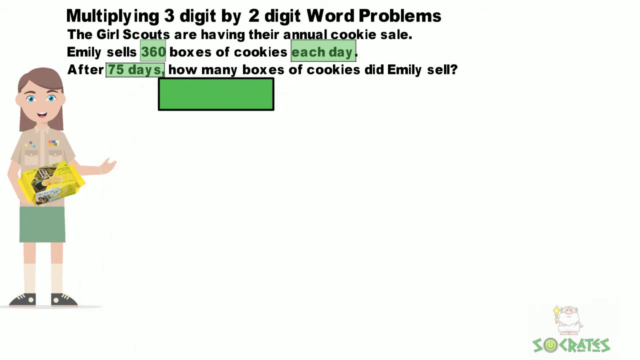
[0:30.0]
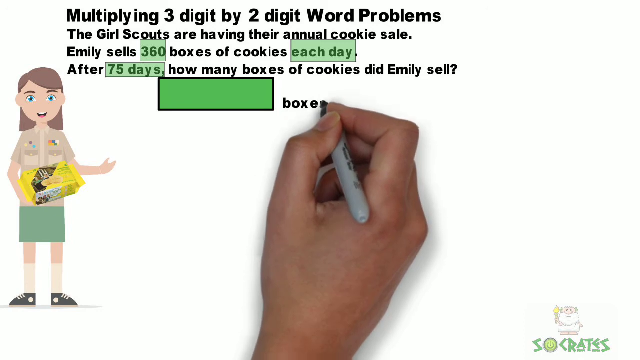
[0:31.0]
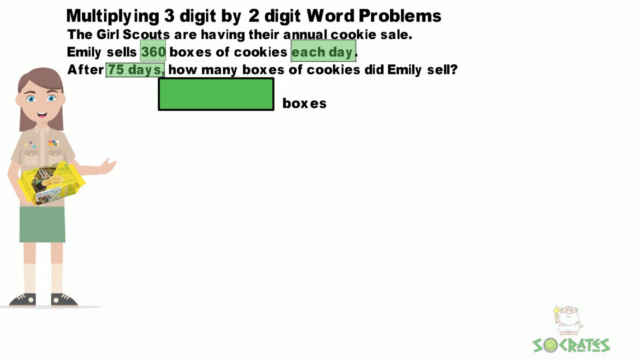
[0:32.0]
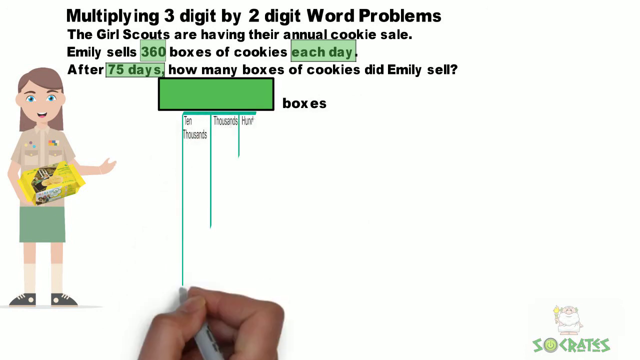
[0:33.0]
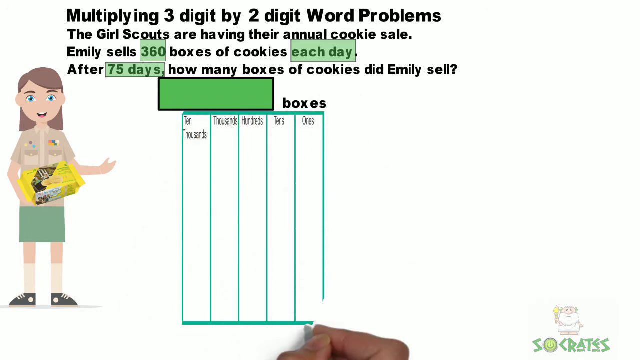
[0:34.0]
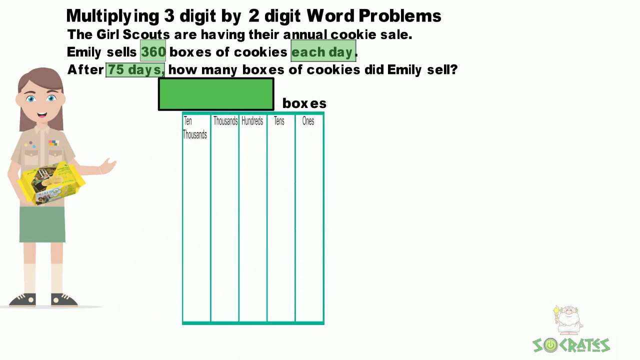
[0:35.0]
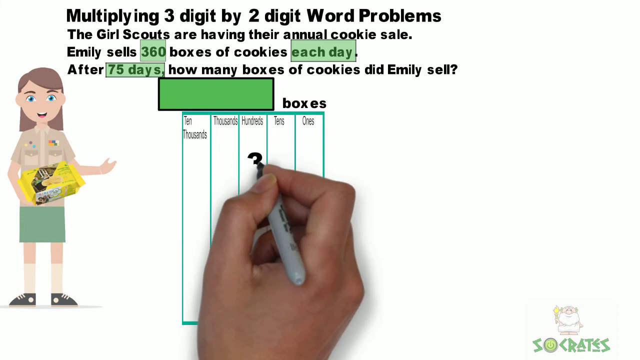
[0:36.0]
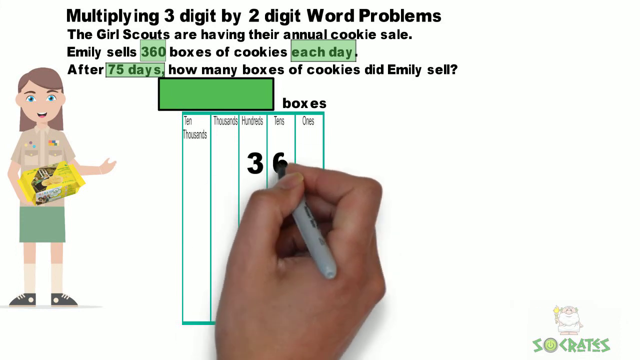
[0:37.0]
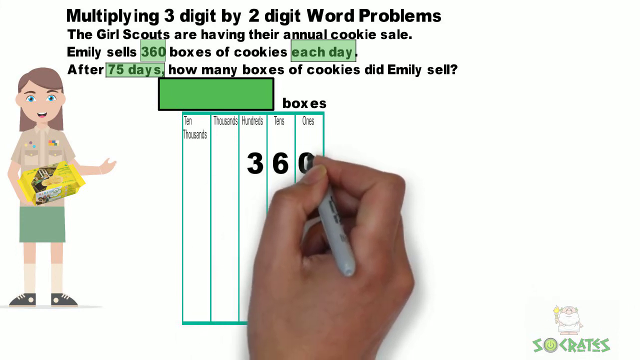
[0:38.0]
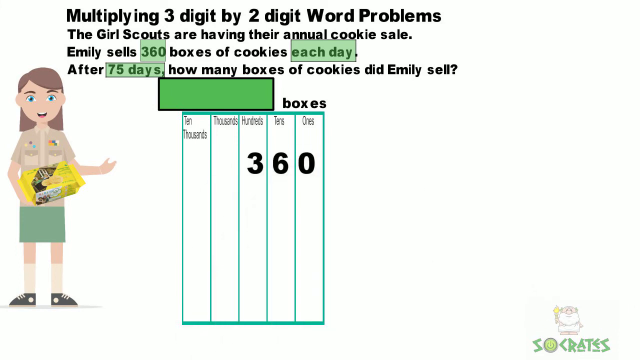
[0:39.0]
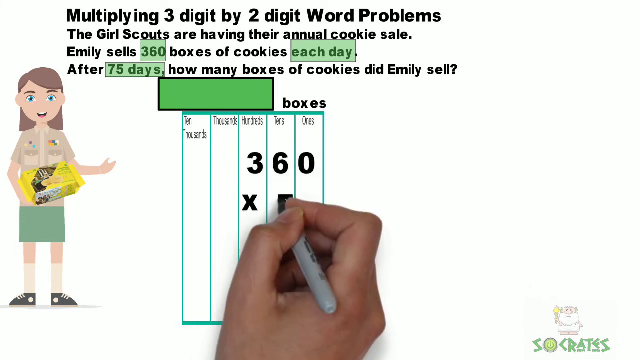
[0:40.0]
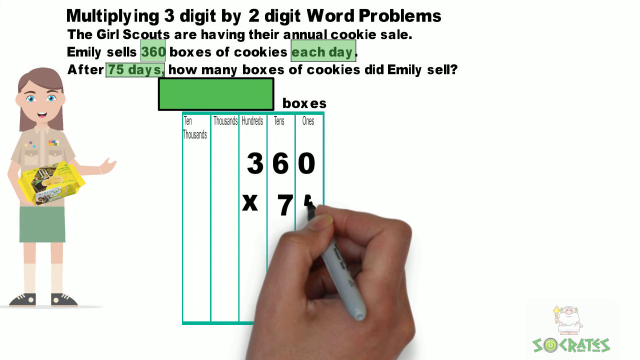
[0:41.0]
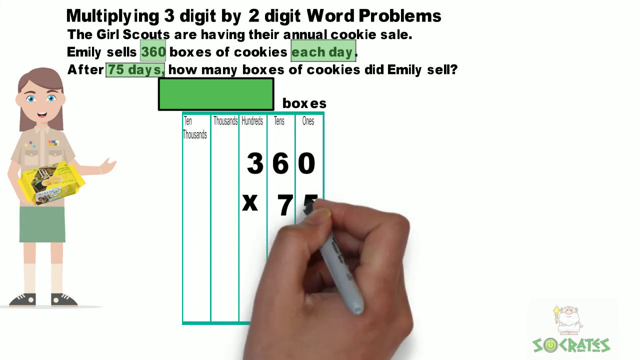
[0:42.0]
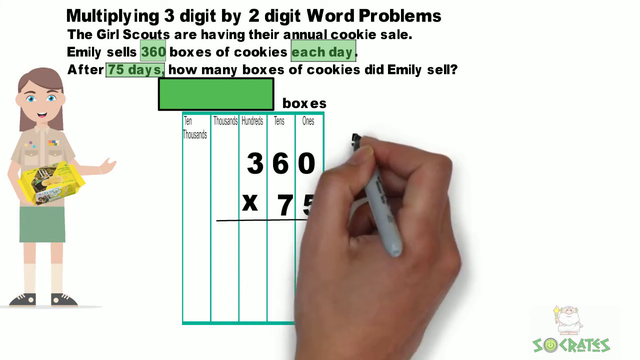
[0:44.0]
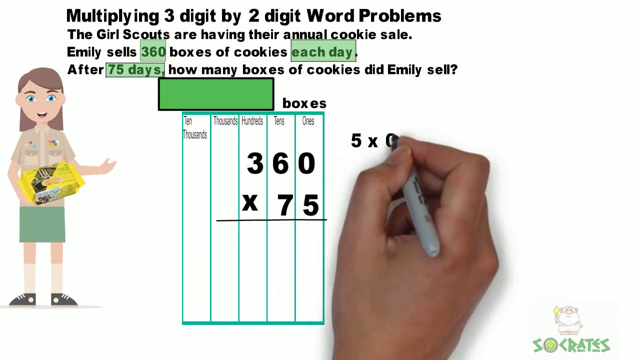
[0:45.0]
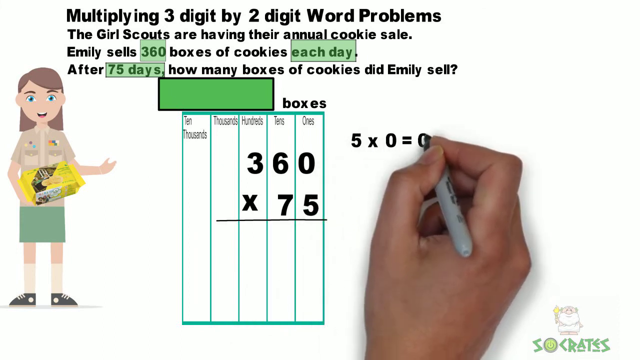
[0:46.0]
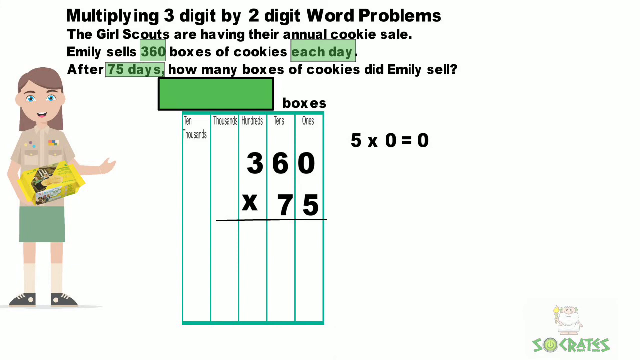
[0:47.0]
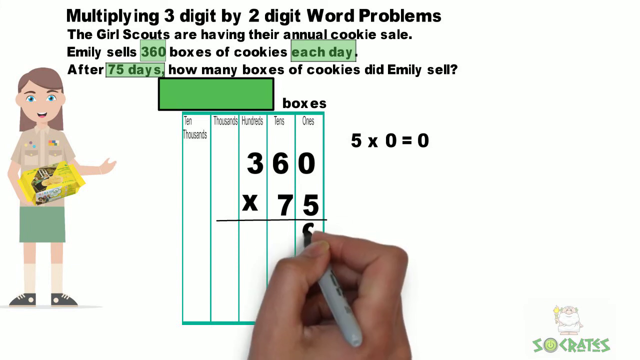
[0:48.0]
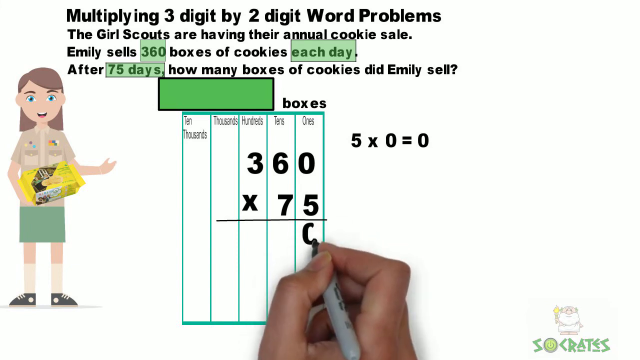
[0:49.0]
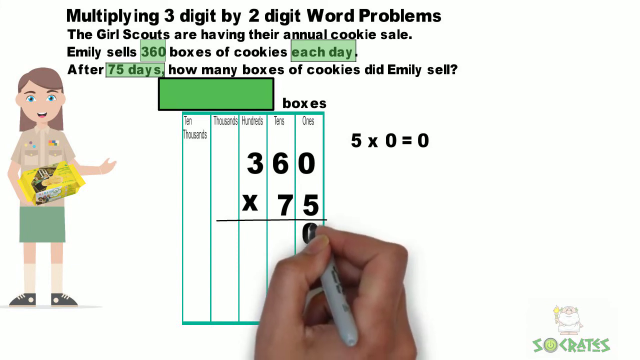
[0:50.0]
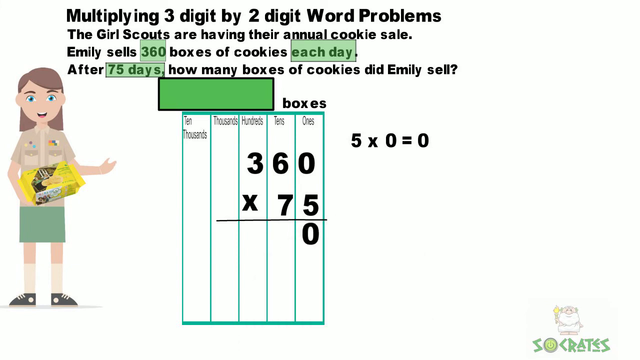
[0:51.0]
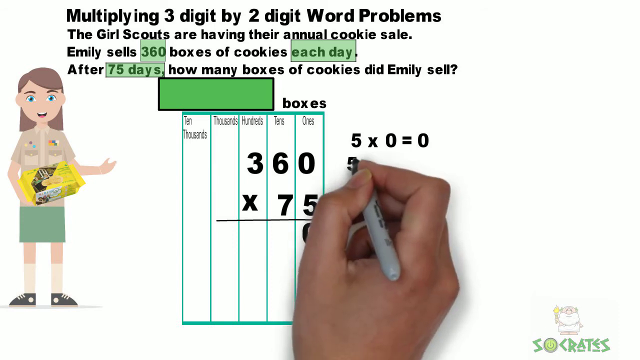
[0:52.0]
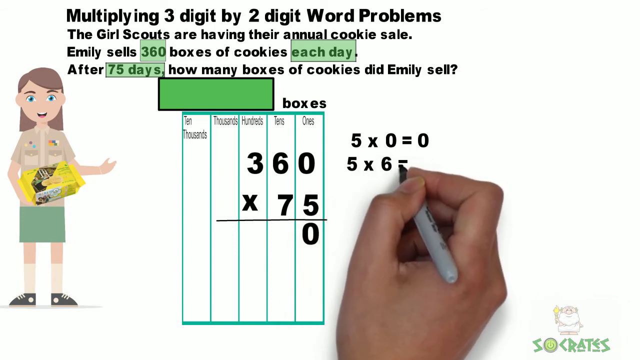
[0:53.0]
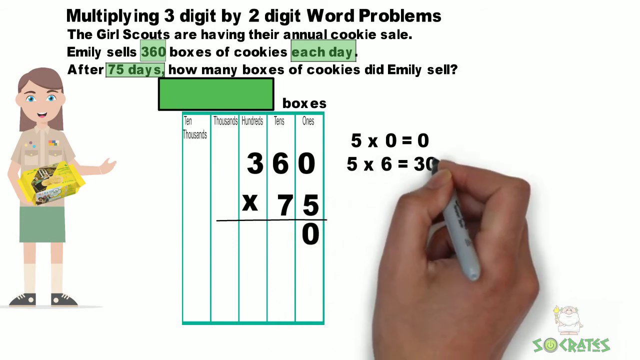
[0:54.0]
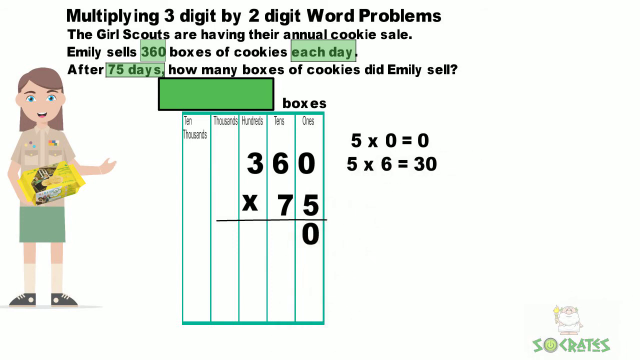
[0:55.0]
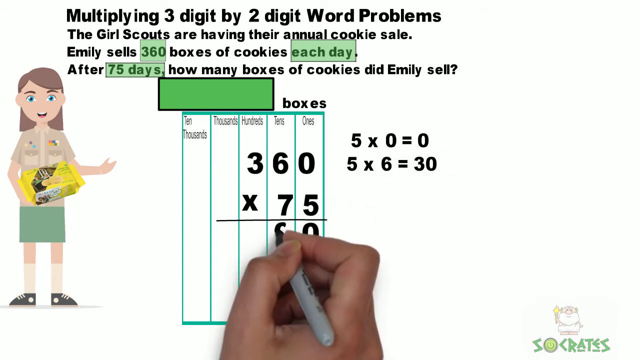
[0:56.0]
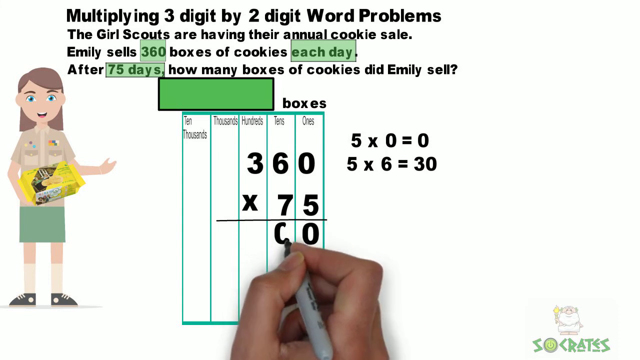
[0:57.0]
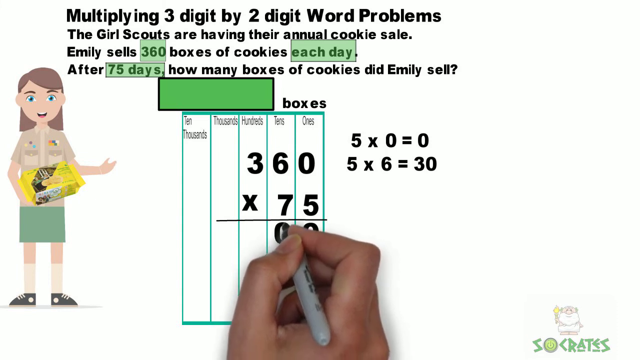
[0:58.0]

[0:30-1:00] A slide with text against a white background shows, on its left-hand side, a cartoon or digital image of what looks like a Girl Scout. She wears a traditional light brown top with some colored pins on it, a green skirt, knee-high white socks and black shoes, and holds what appears to be a yellow box of Girl Scout cookies. The black text reads "multiplying three-digit by two-digit word problems. The Girl Scouts are having their annual cookie sale. Emily sells 360 boxes of cookies each day. After 75 days, how many boxes of cookies did Emily sell?" The phrases "360 each day" and "75 days" are highlighted with green rectangular boxes around them. Underneath the word problem is an empty green rectangular box. A right hand comes onto the screen and draws a table with five columns headed 10,000, thousands, hundreds, tens and ones, outlined in teal. The hand enters numbers: a 3 in the hundreds column, a 6 in the tens column and a 0 in the ones column. A multiplication symbol goes underneath, with a 7 in the tens column and a 5 in the ones column. "5 times 0" appears on the screen in black, equaling 0, and a 0 is written under the 5 in the table. To the right of the table, "5 times 6 equals 30" appears in black, and a 0 is also written under the 7 in the tens column.